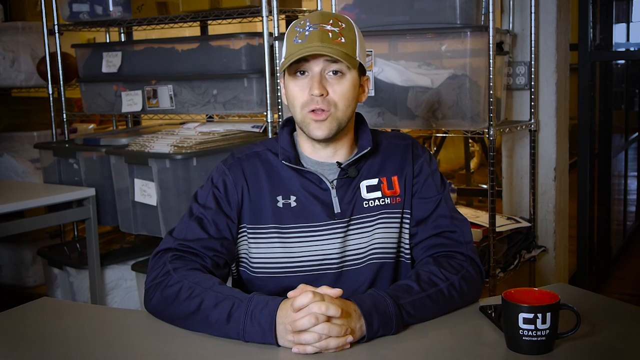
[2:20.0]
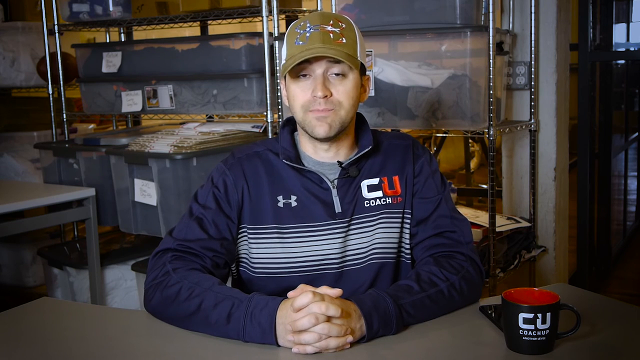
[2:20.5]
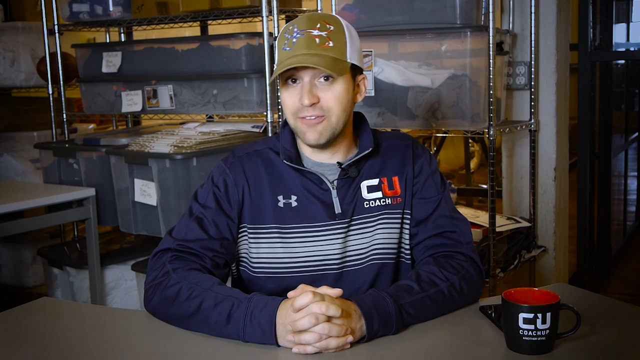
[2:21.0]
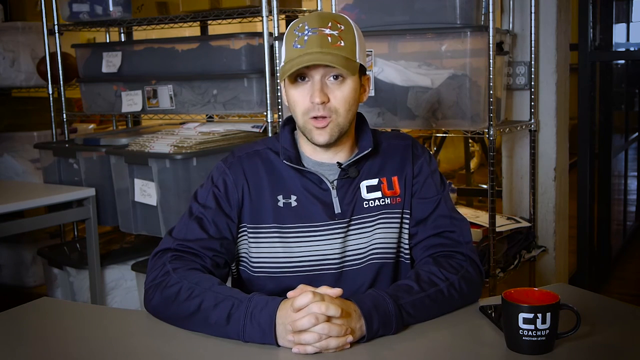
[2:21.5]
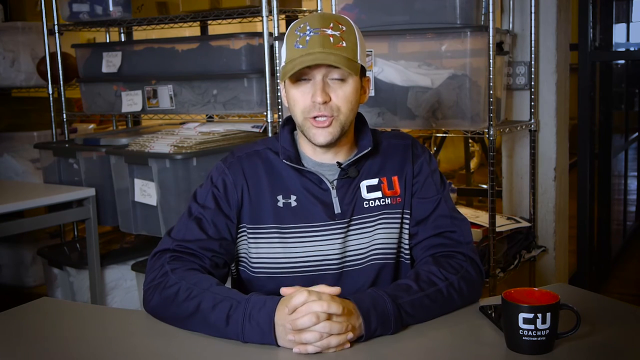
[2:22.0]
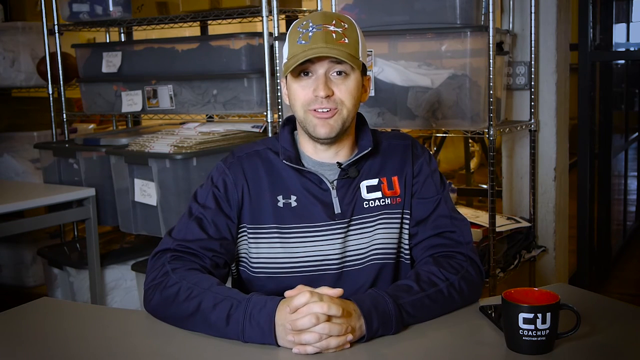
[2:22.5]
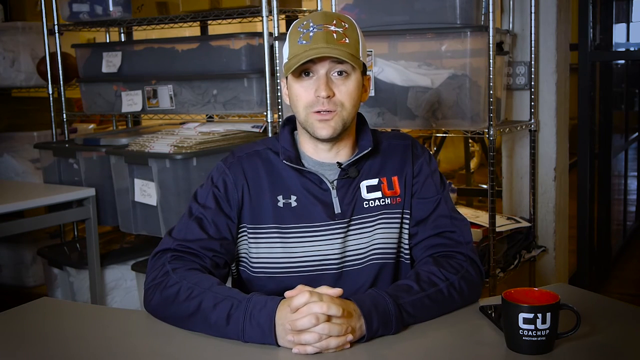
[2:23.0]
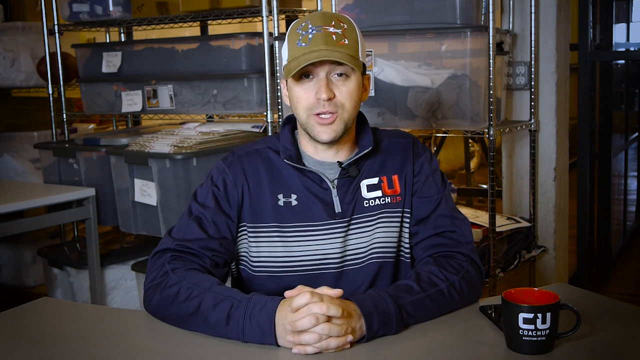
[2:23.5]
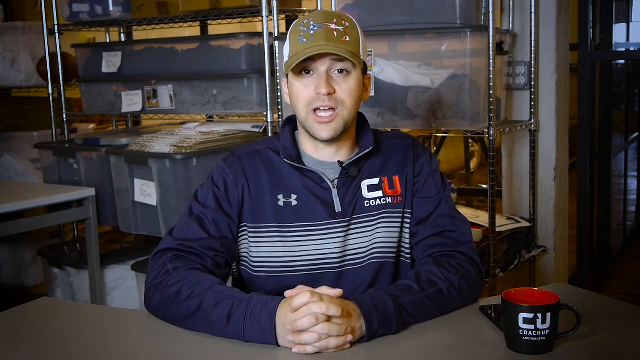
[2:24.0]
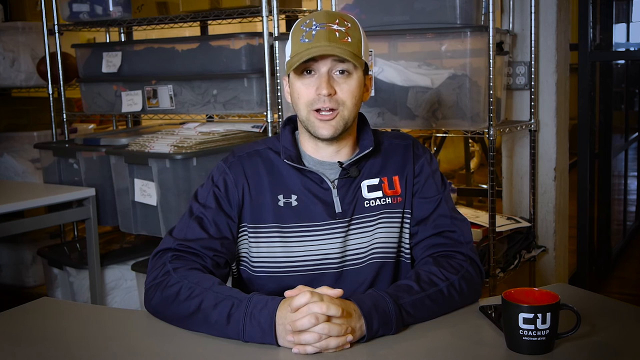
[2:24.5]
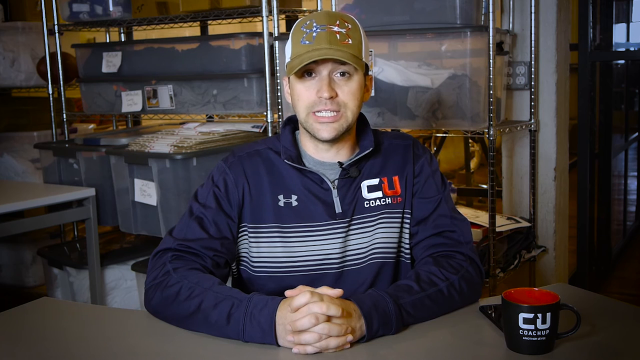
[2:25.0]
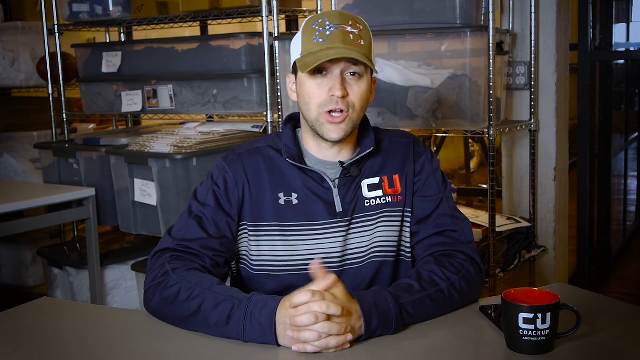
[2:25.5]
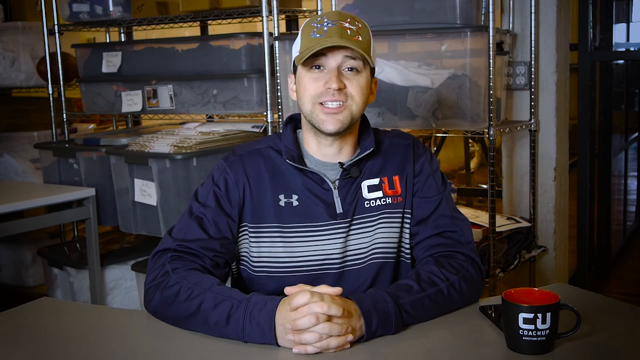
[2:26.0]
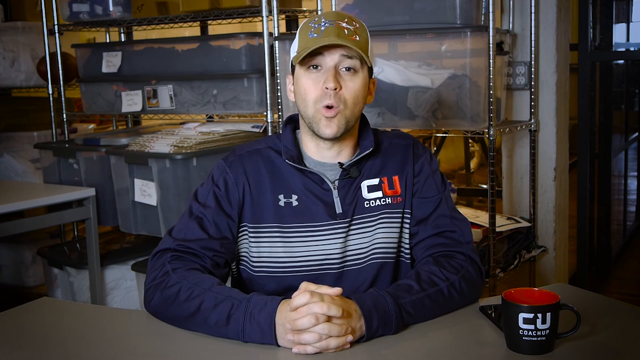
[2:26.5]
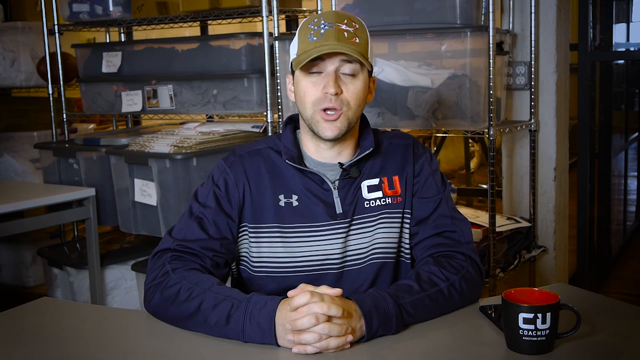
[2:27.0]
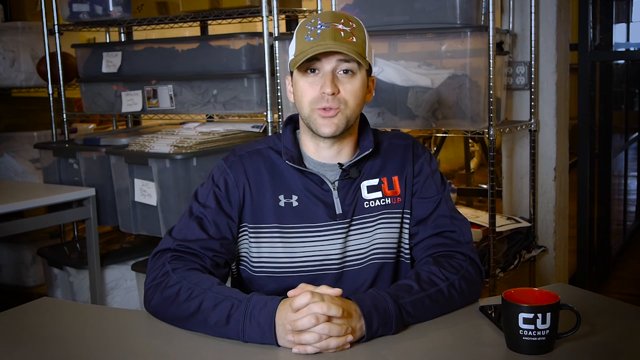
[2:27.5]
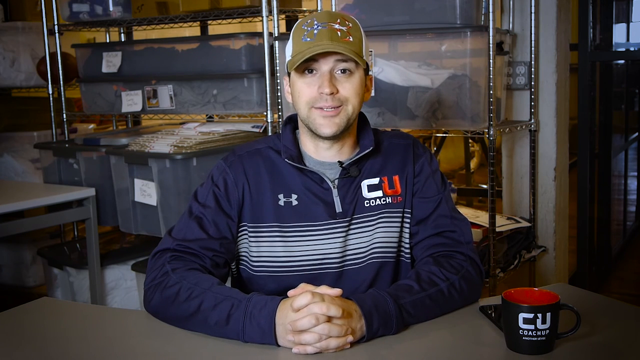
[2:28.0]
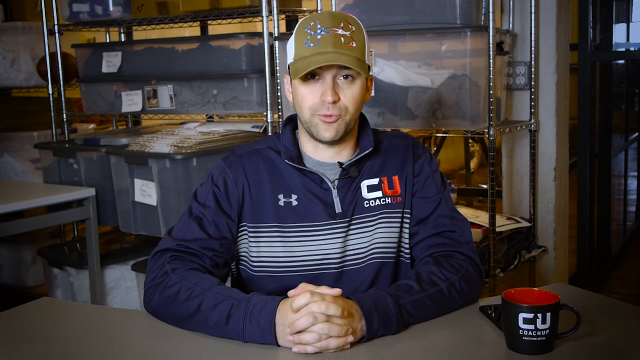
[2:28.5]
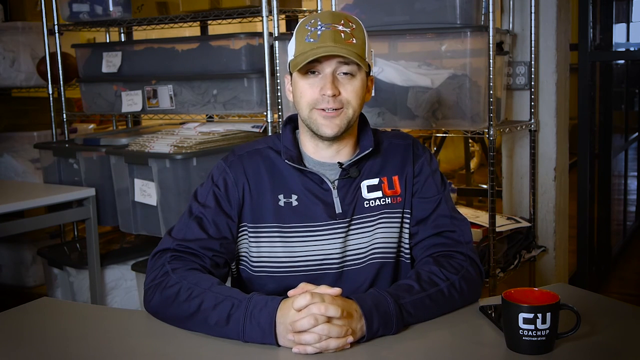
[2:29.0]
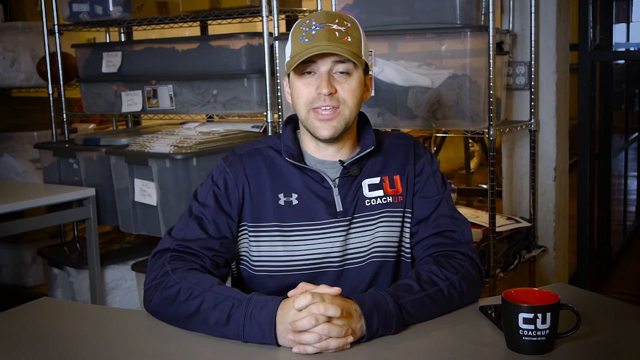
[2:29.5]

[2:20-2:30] A man talks to the camera in some type of home office area. On the desk in front of him is a coffee cup. Behind him are shelves with clear plastic containers that look like they are storing some type of objects. He wears a dark blue sweatshirt with horizontal white lines across the center, and on the right upper chest area are the initials "CU" with "CoachUp" underneath.